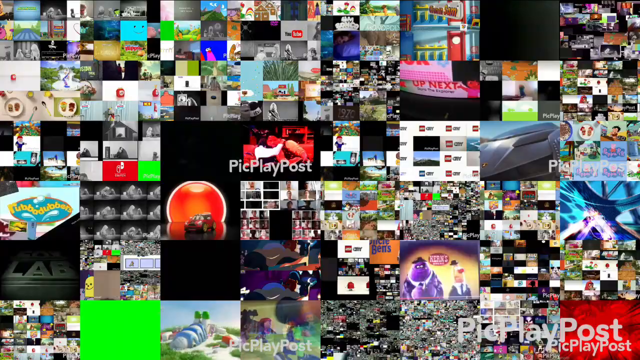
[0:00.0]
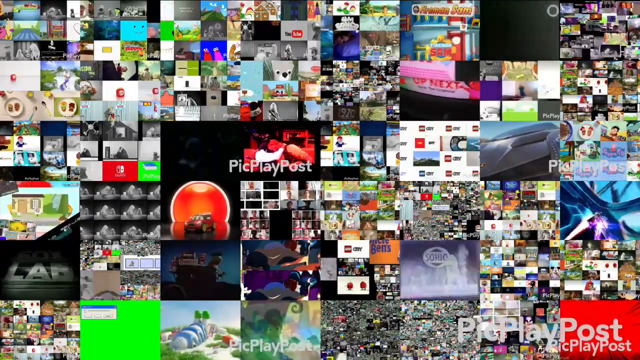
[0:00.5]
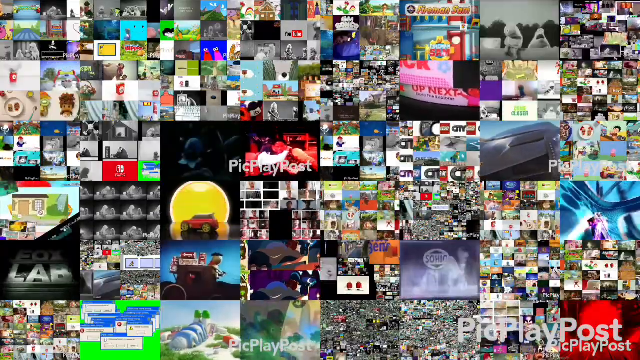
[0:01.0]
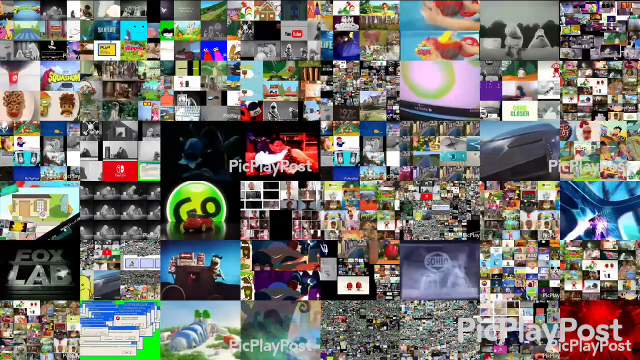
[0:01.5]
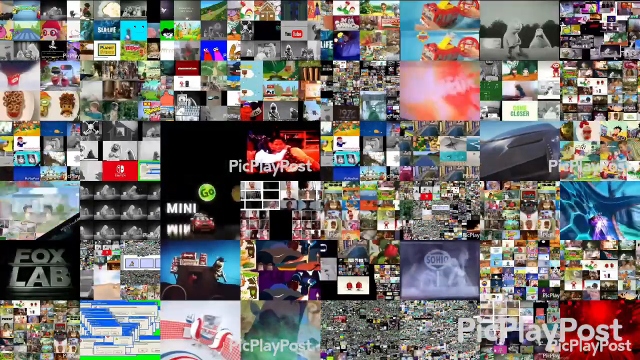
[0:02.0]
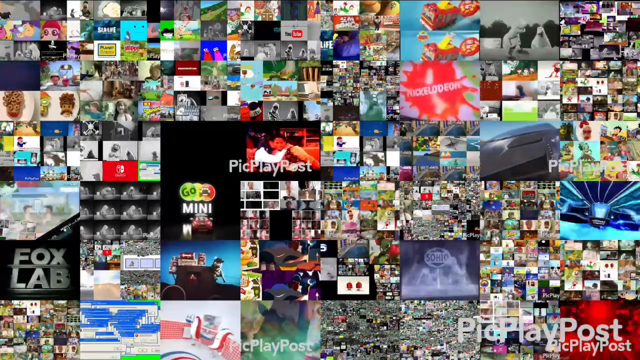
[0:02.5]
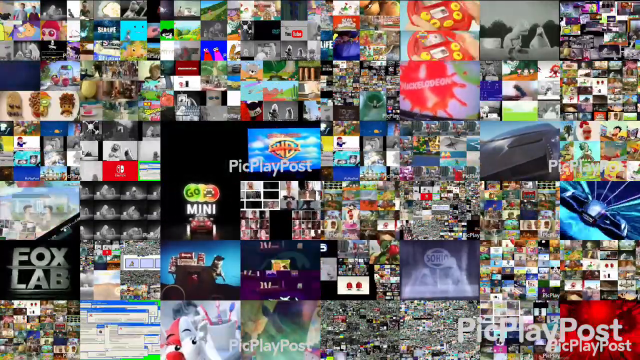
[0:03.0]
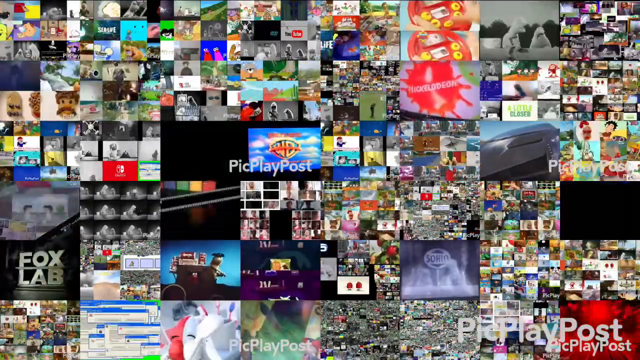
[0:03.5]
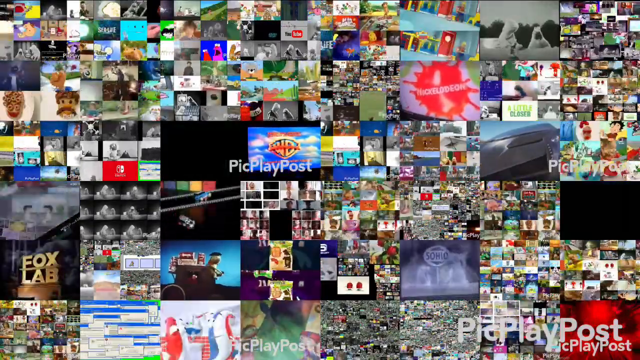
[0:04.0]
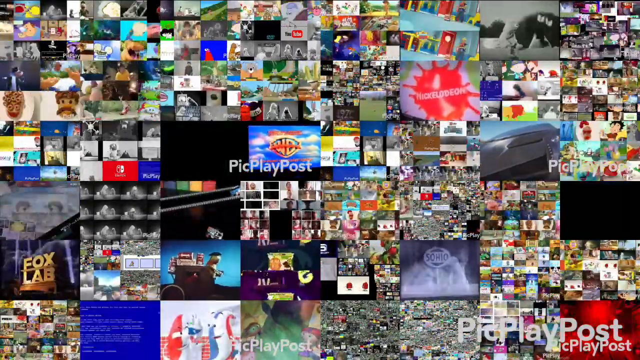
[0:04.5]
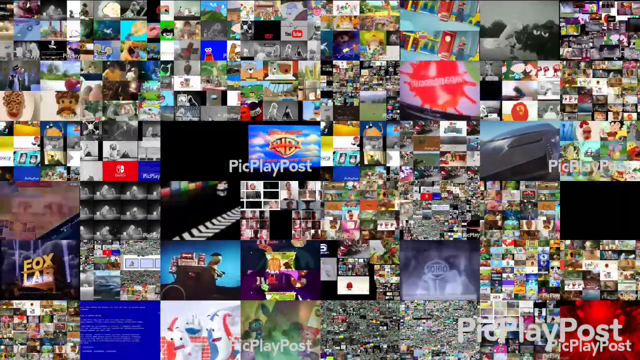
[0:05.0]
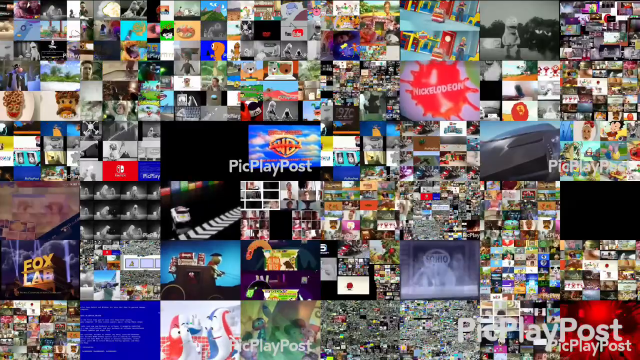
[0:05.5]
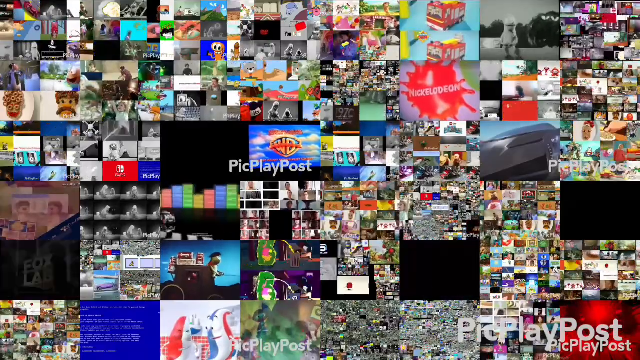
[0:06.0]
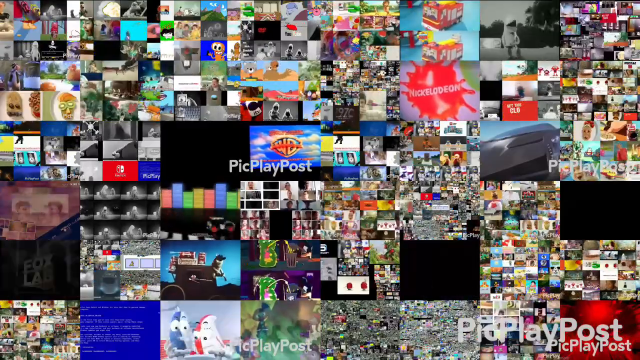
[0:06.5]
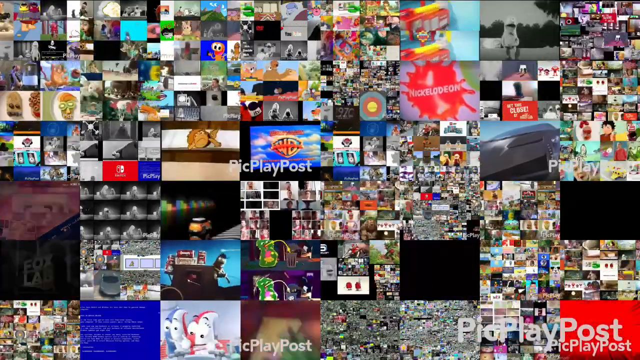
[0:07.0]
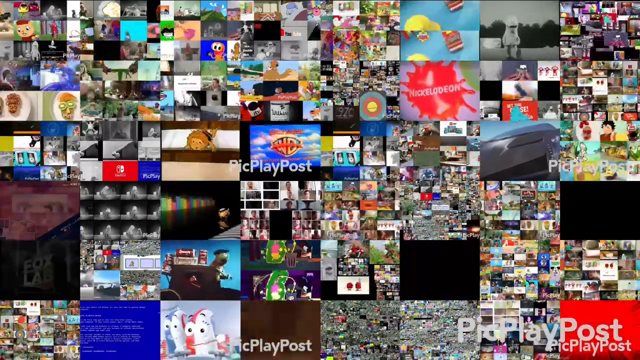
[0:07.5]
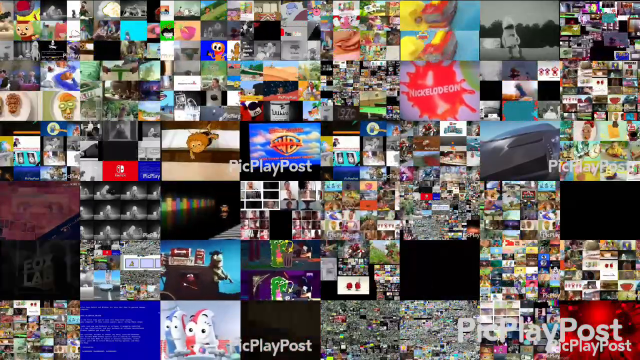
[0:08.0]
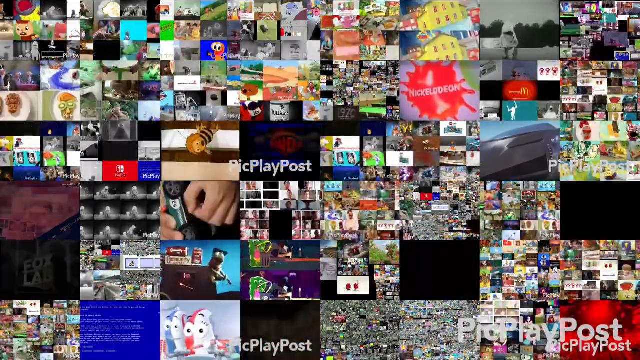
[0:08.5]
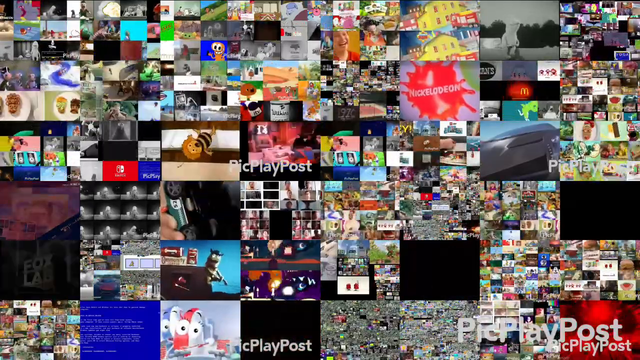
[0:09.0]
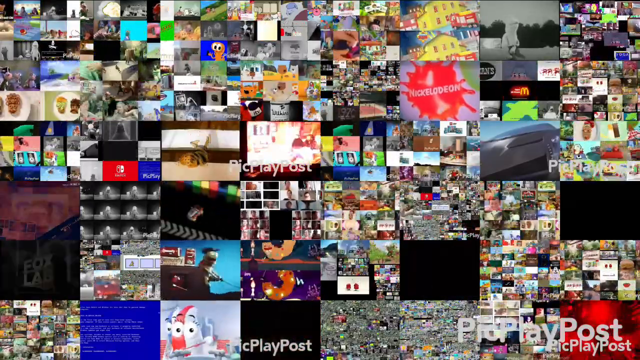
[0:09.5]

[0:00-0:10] Text on the screen reads "pick play post." Many small screens show different movies, shows and animations, probably hundreds of them. Some are from Warner Bros, as the Warner Bros logo appears on the middle screen. One screen is from Monsters Inc, one shows a Go Mini version of a movie, and one is a Nintendo movie, marked by the Nintendo icon. Another shows the McDonald's icon. Some of the screens show animation, and some show the playtube icon.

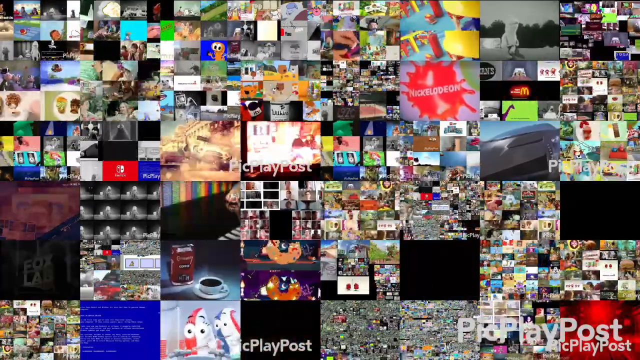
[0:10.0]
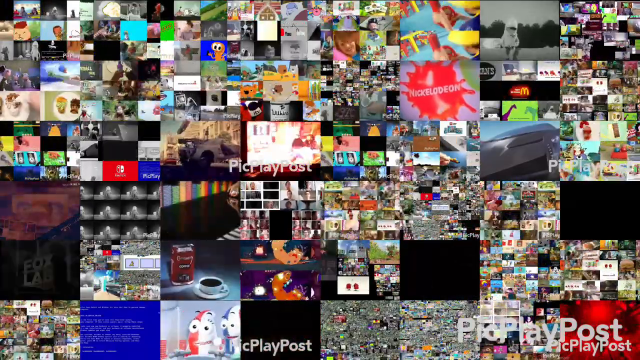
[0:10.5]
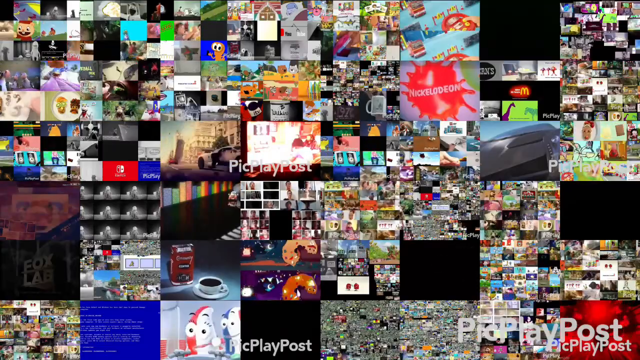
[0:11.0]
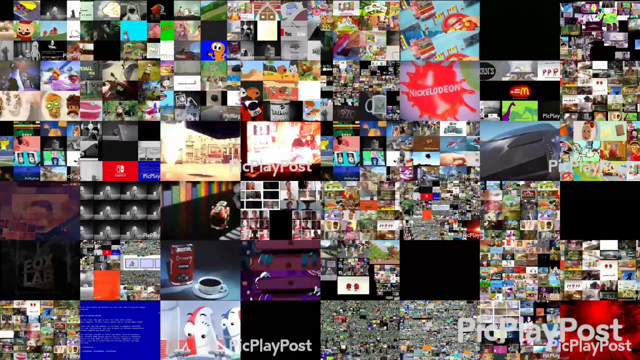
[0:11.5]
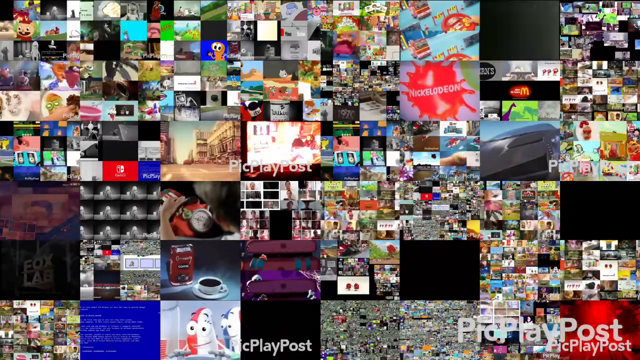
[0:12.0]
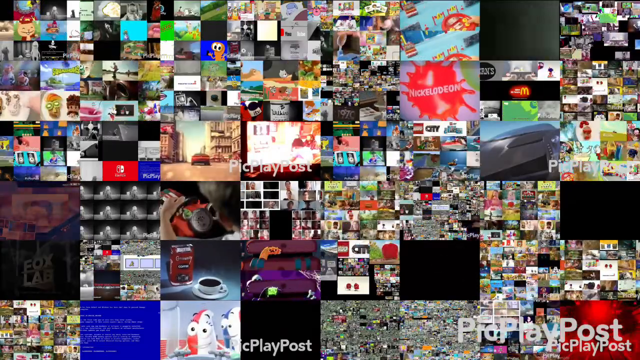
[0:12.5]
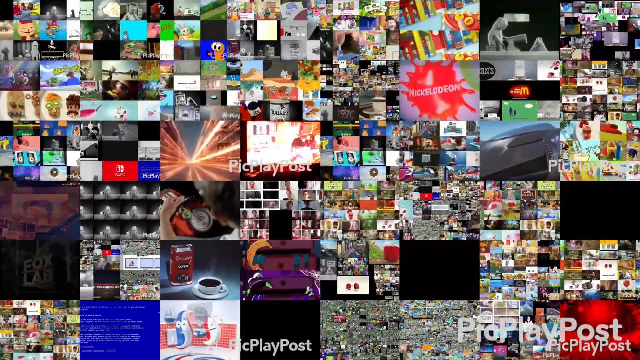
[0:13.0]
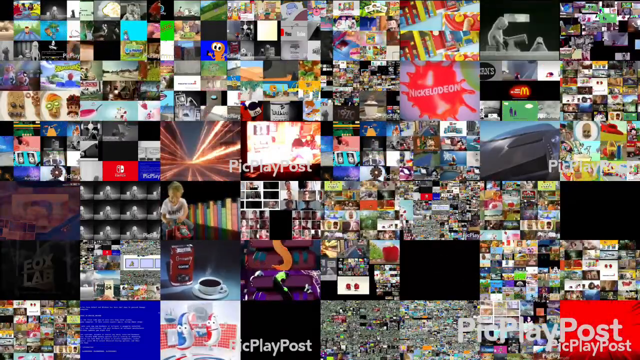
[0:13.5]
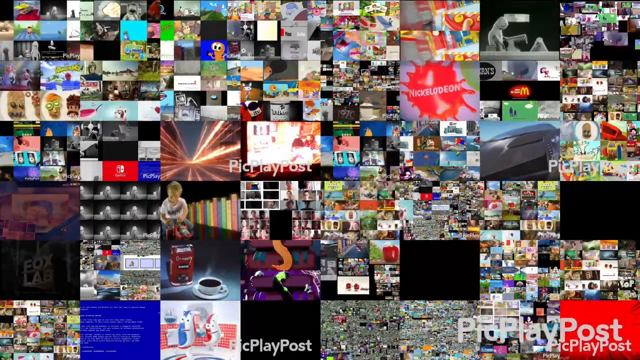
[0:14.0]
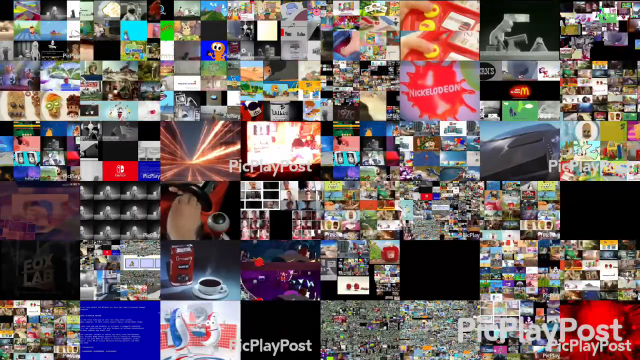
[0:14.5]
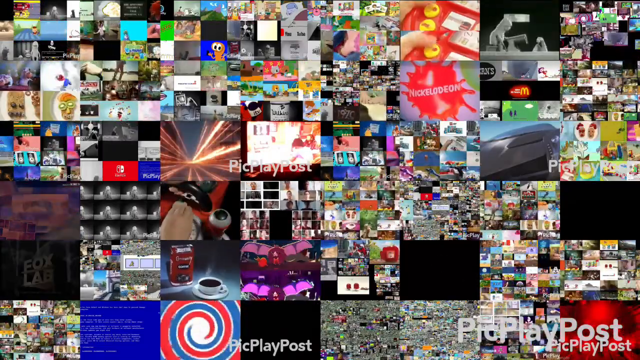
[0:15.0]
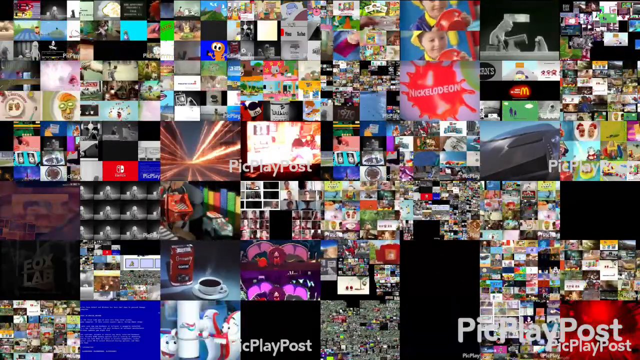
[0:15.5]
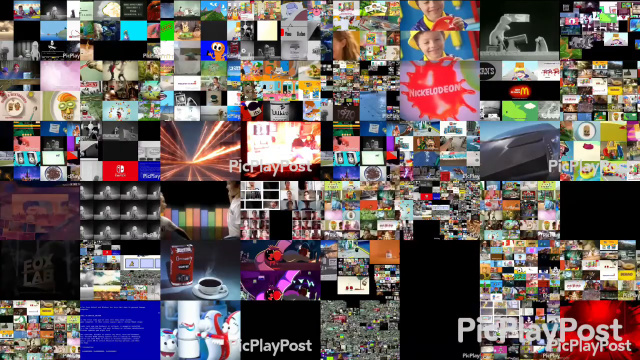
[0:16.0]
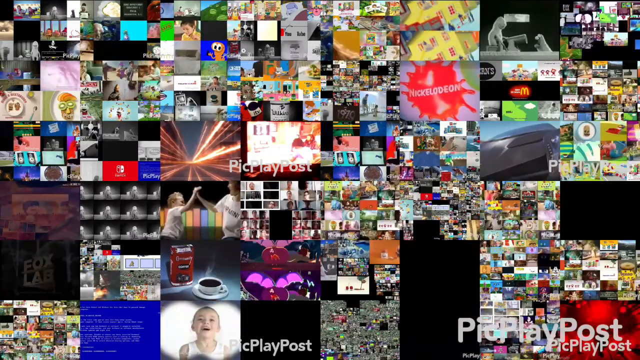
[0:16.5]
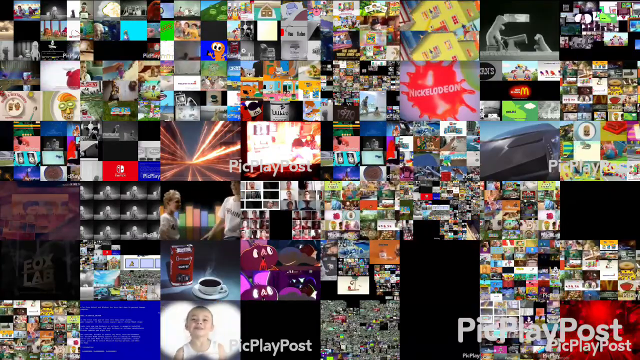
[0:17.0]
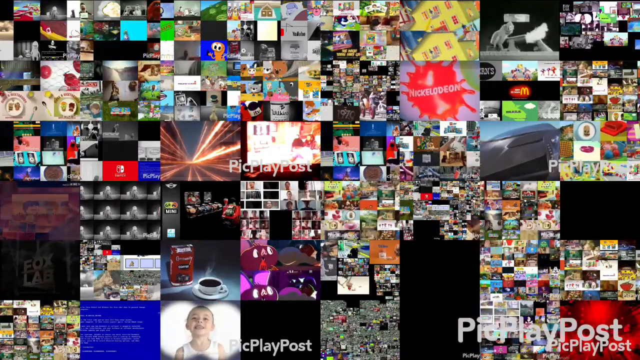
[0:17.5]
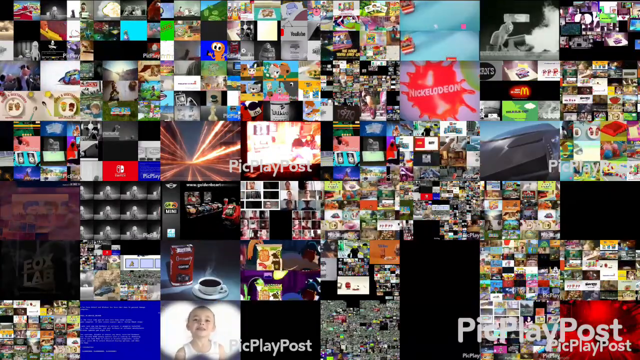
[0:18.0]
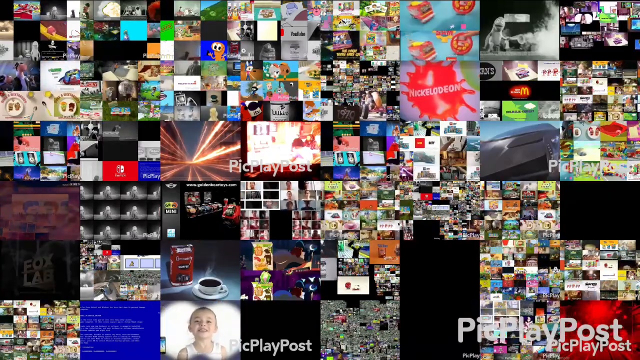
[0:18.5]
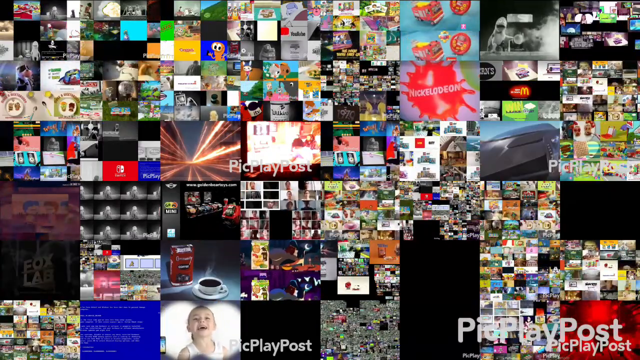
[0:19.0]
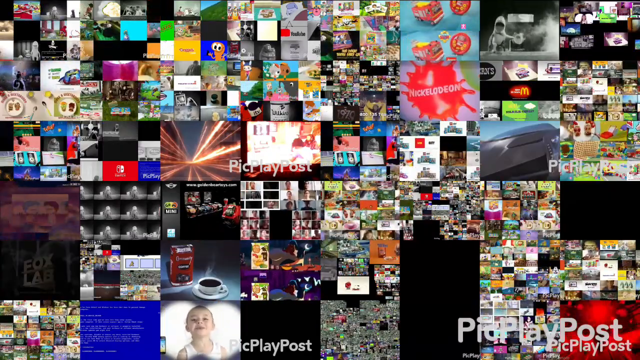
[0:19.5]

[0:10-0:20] The screens show animated movies from different franchises. One shows a red cane and a white man with black coffee, another shows vehicles racing, and a toy advertisement shows an elder male and a toddler fixing a vehicle, which is then set free and races. An animation on the top right screen looks more like ventriloquism. The "peak play post" watermark is displayed all over the video. The clips are small, with some bigger than others.